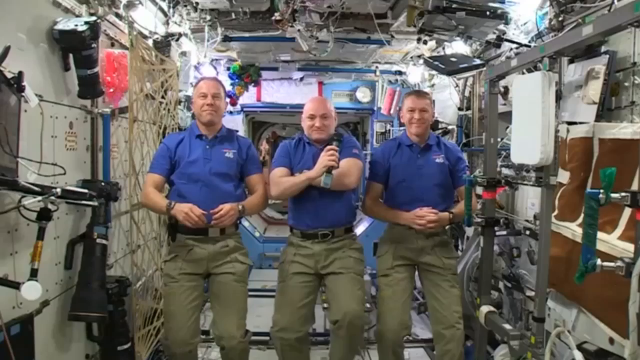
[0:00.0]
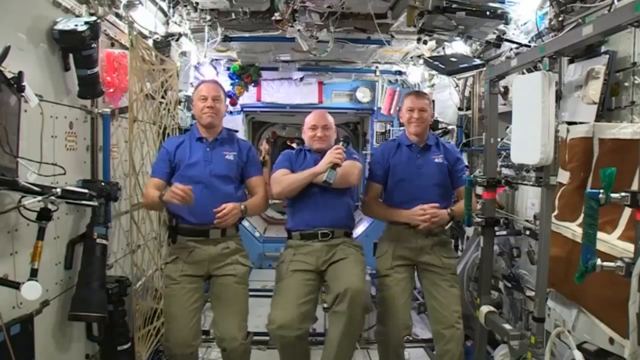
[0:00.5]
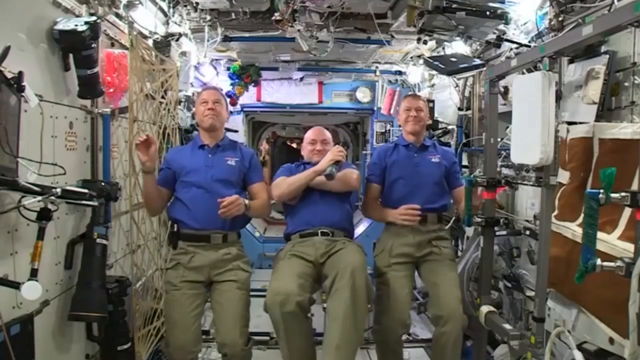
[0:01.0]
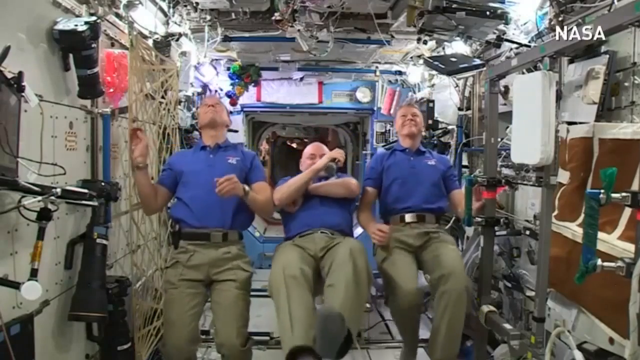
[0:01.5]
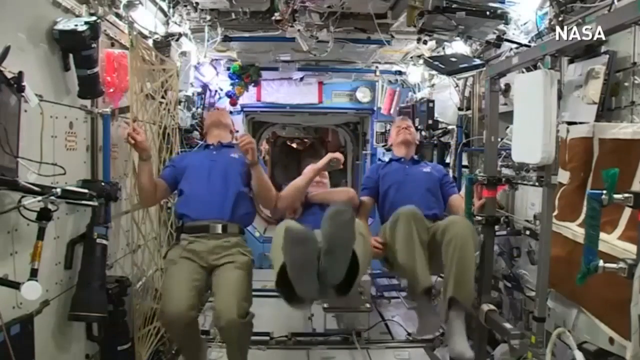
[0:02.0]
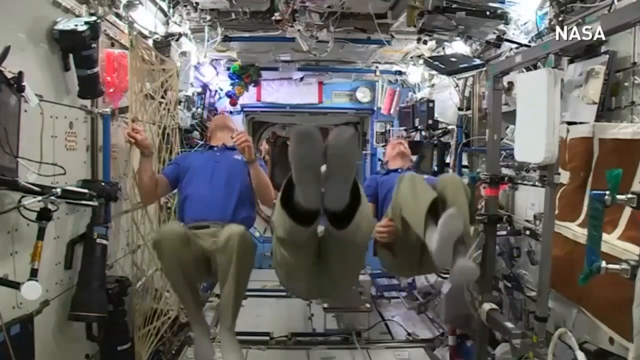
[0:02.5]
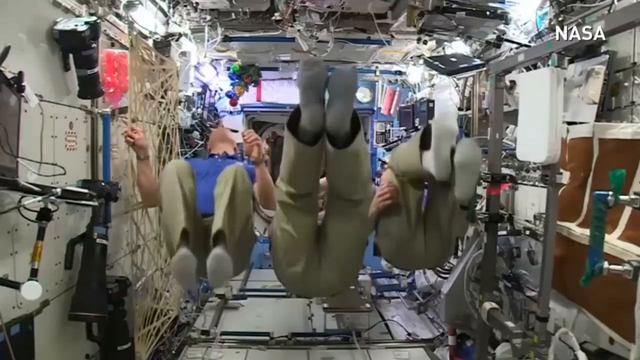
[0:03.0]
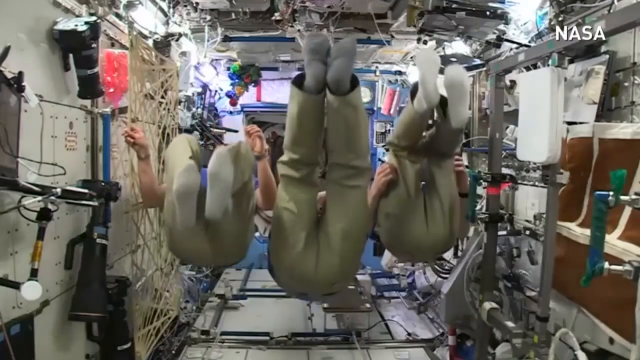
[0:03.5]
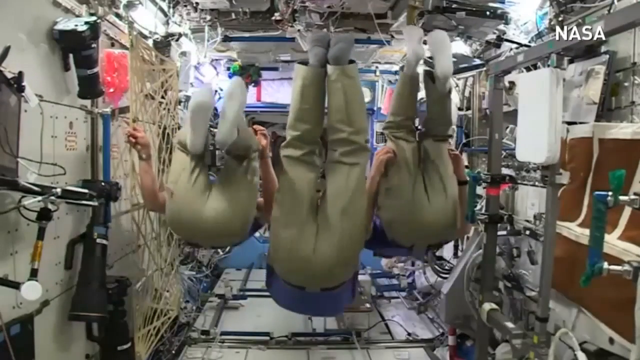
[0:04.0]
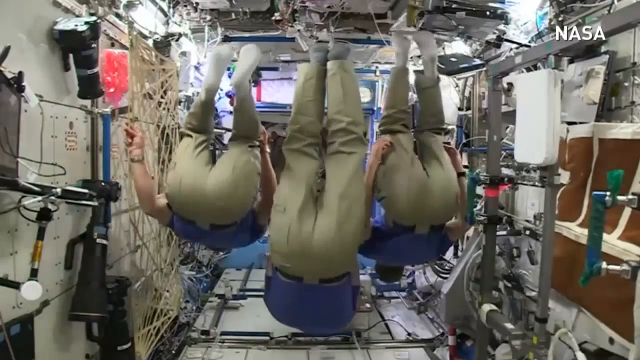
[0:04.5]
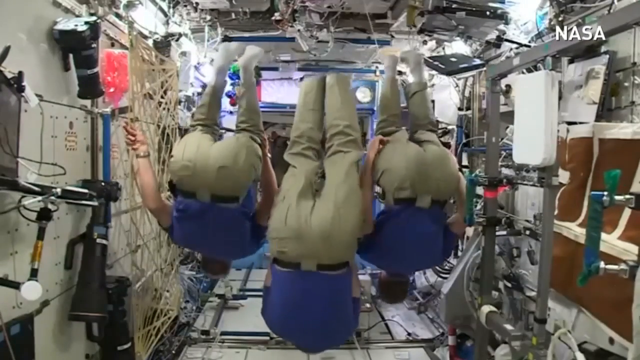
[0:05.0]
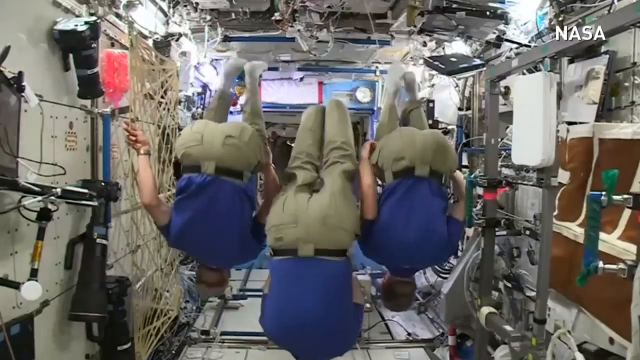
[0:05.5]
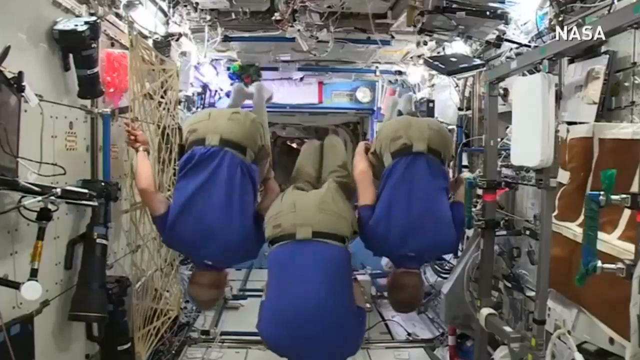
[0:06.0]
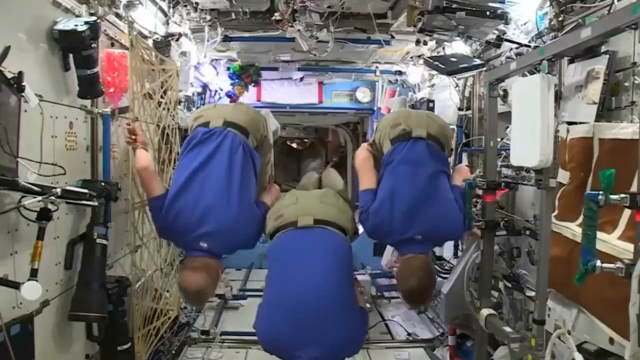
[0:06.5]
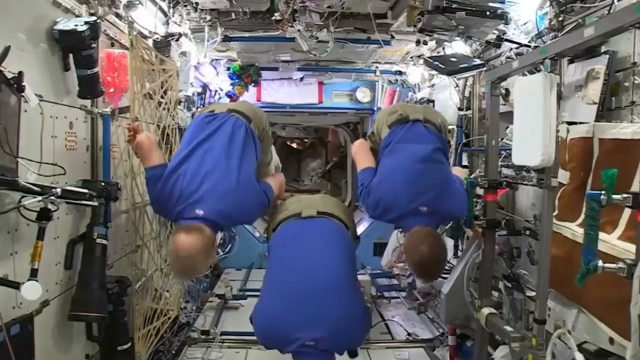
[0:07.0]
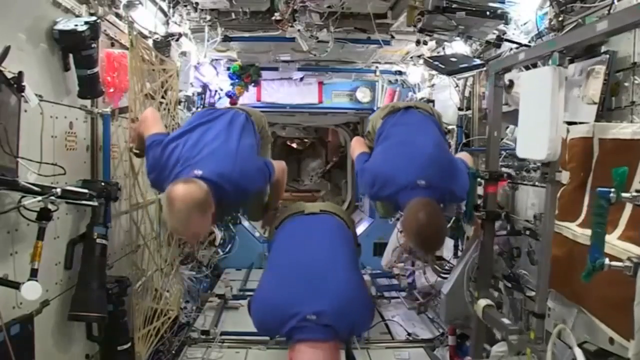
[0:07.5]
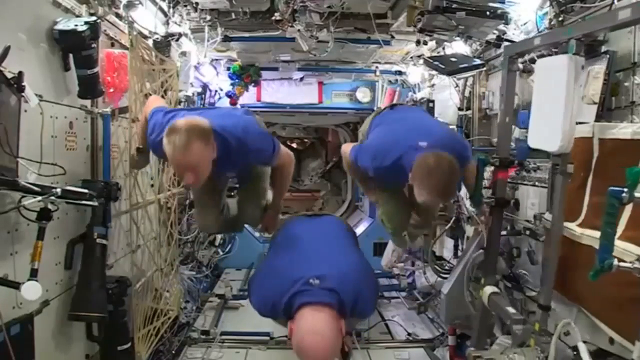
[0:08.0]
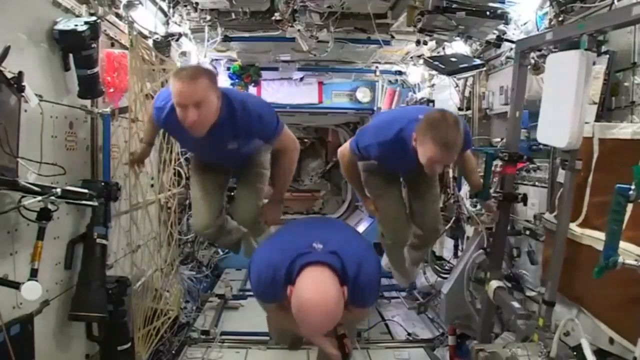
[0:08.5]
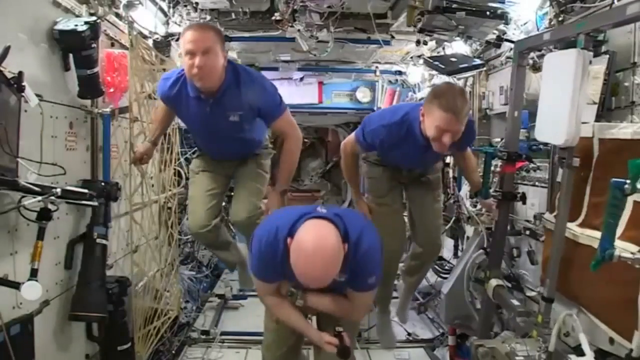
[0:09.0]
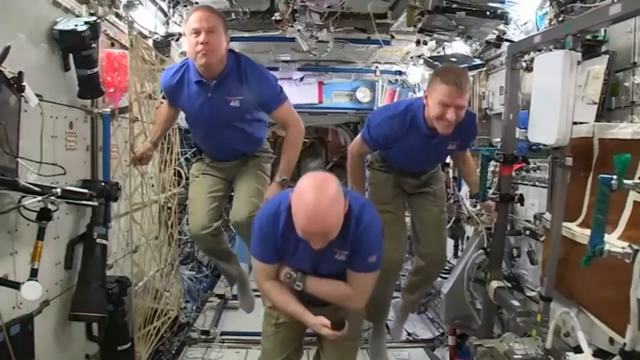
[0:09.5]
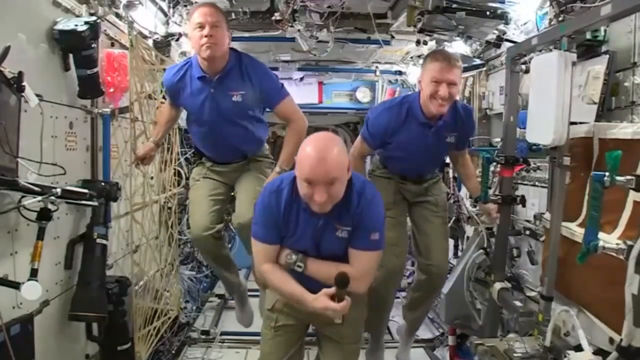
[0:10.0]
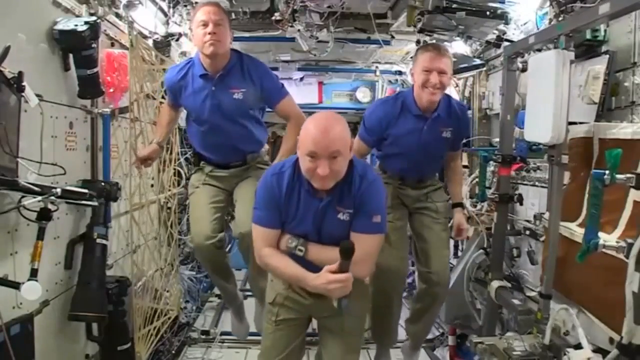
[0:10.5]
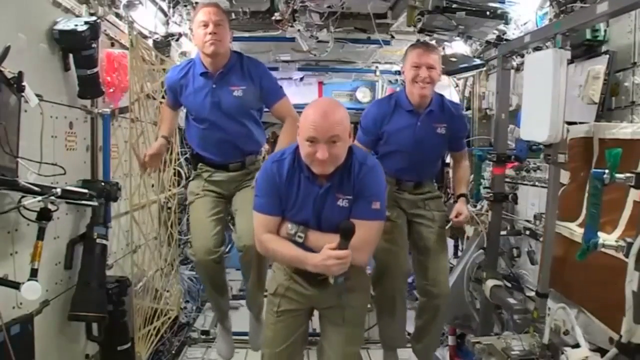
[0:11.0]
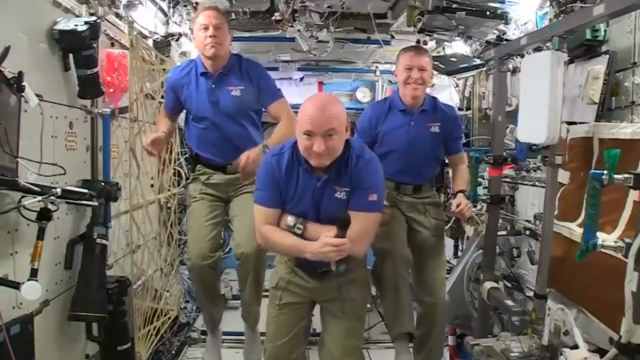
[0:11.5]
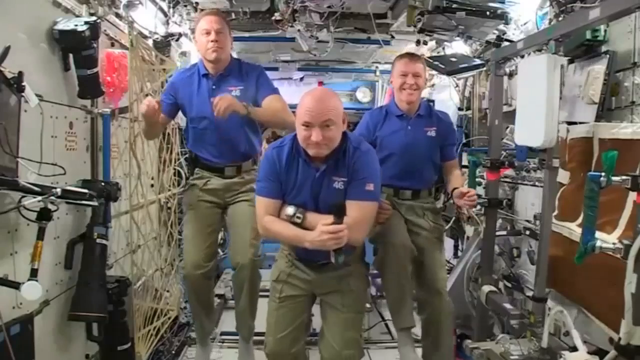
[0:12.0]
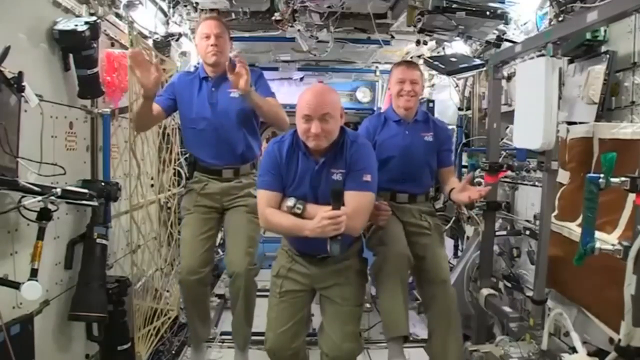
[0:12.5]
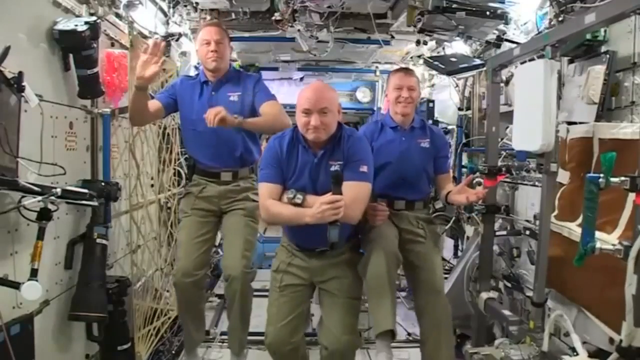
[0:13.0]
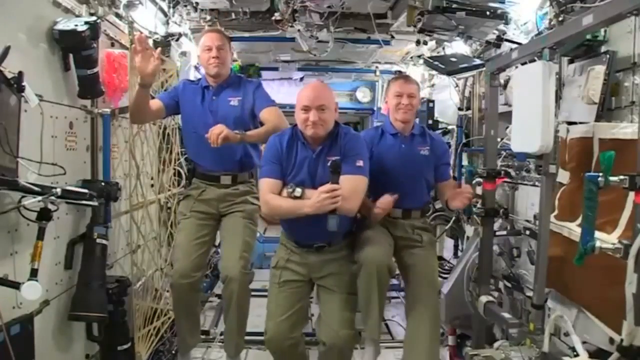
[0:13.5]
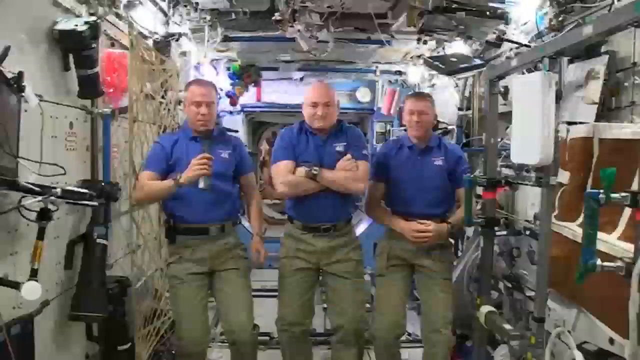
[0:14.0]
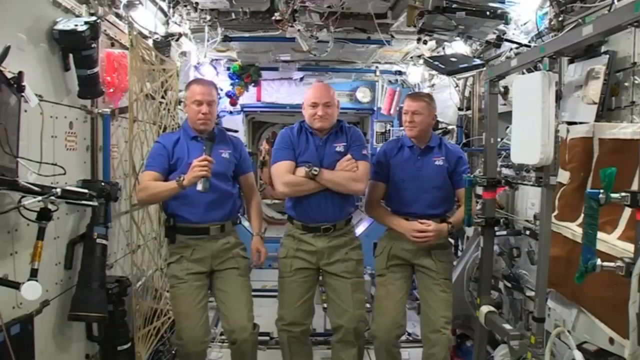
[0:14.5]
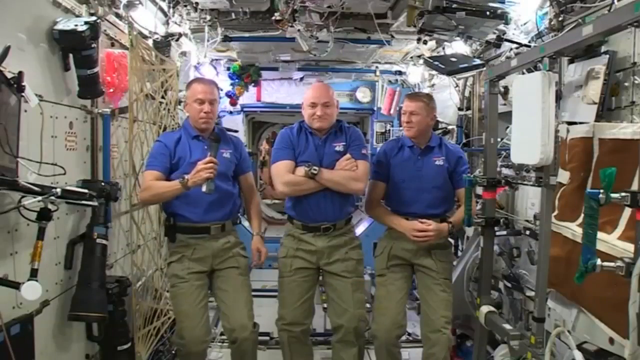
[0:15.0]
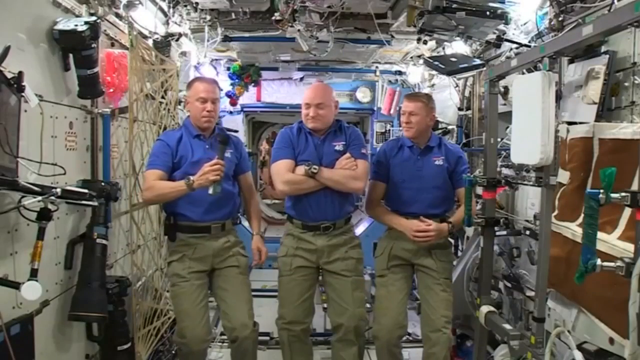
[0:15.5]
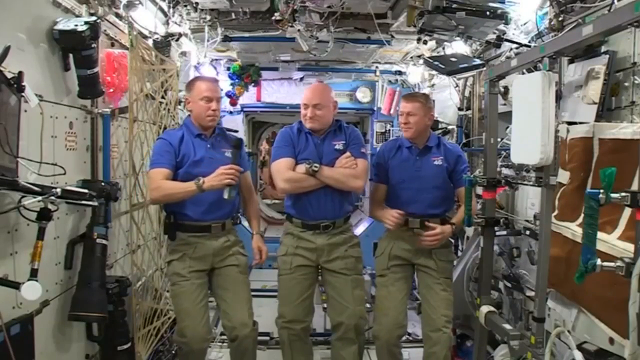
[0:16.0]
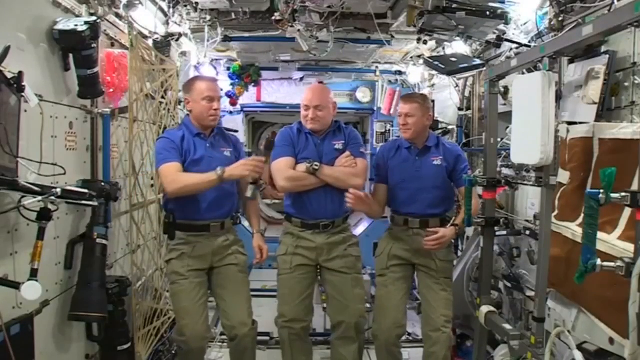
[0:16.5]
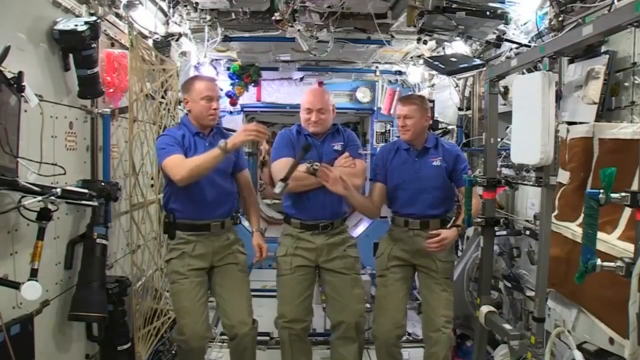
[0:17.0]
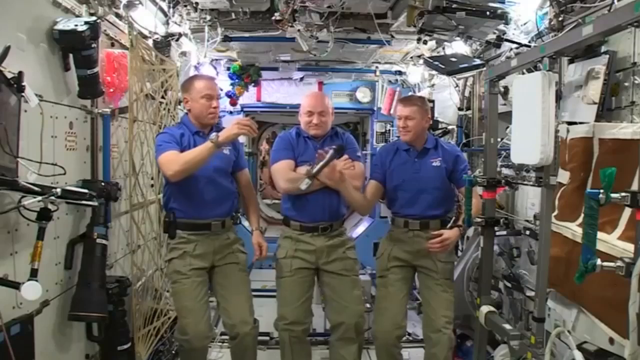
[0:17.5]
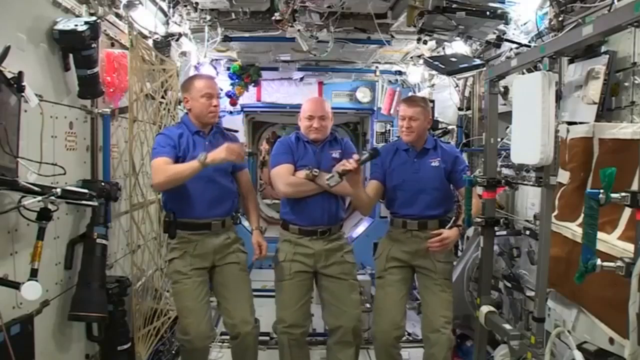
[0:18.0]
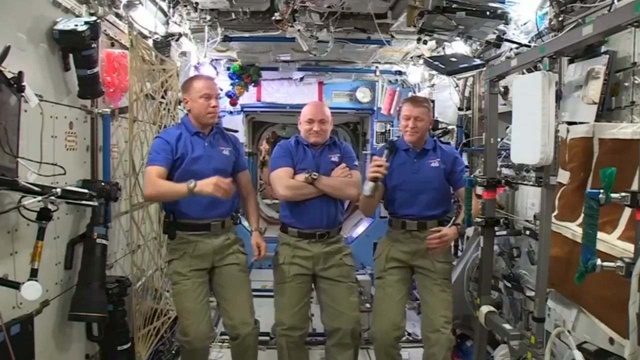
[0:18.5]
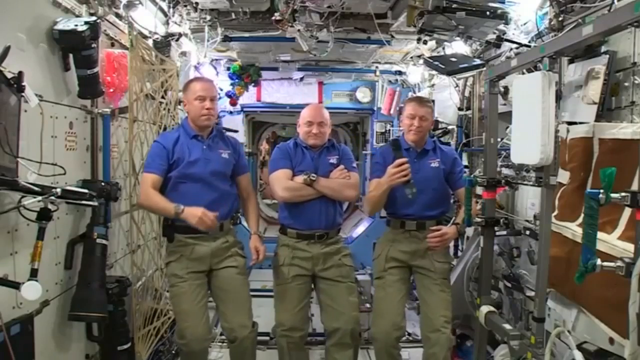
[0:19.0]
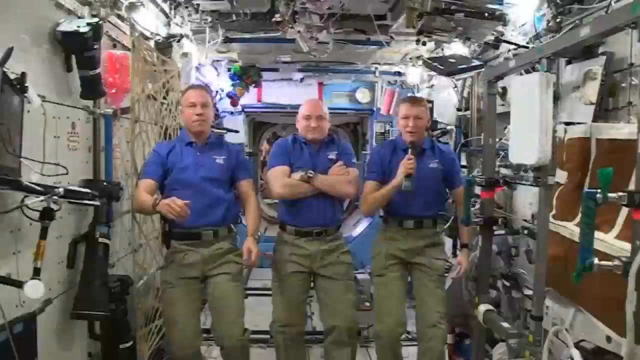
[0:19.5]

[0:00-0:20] The scene opens on an enclosed space that appears to be a space capsule. The walls are shiny, glossy white metal and are covered in equipment. On the left side of the frame is a tall pole with a blue bar and something red that looks like a blood bag or IV bag hanging upside down, feeding into something. There is a tangle of beige wires. There is lighting at the top of the scene, though it is possibly just reflections off the shiny surface. On the right side of the frame are brown sections with white objects that look like harnesses. White boxes are attached to the wall, there is exposed paneling of a kind of gray metal, and a handle sticks out of the wall. Across the middle of the frame, in a horizontal line, are three Caucasian men of varying ages who look to be in their 40s or 50s. They wear wristwatches, are clean-shaven, and have shaved heads; the one in the middle is bald and looks older than the others. They wear short-sleeved blue shirts with collars, the same khaki pants and the same kind of belt, and all smile at the camera. The man in the middle holds a black cylindrical device with a shiny band on it, possibly a microphone. All three flip backwards in a synchronized motion, doing a backflip in place, which suggests they are in zero gravity. The man on the right softly strikes one of the devices to his left, on the right side of the frame, setting it moving away before it pulls back toward him, so it appears to be tethered in some fashion. They all return to their original positions. The man in the middle has his arms folded across his chest, the man on the left holds the cylindrical object, apparently a microphone, and the man on the right has his hands clasped in front of his belt. The man on the right passes the microphone to the man on the left, who begins to talk.